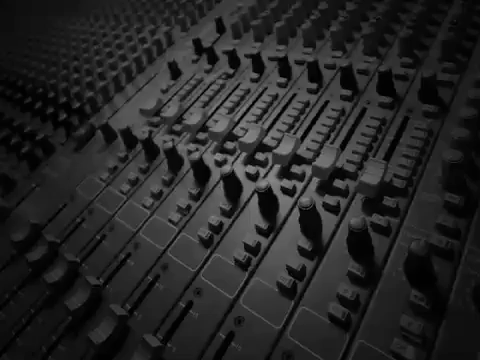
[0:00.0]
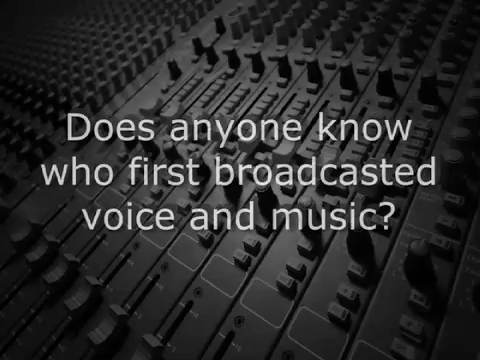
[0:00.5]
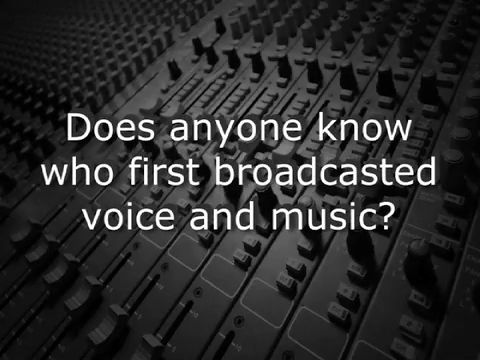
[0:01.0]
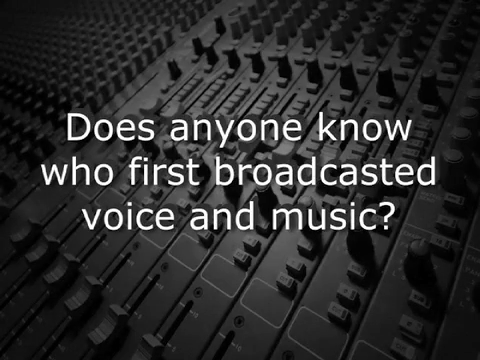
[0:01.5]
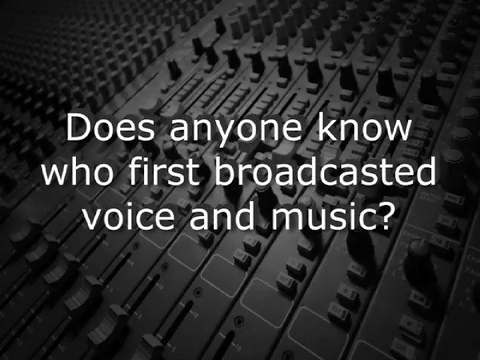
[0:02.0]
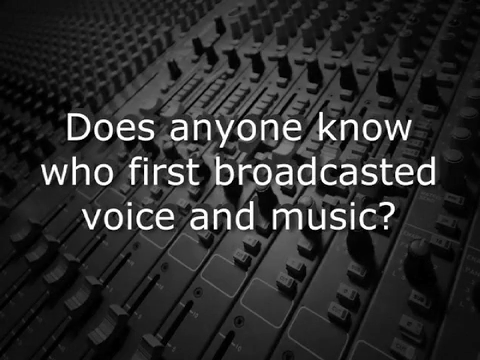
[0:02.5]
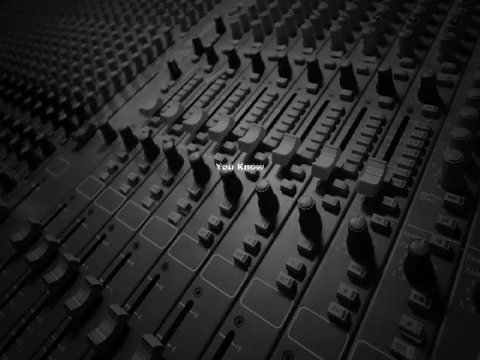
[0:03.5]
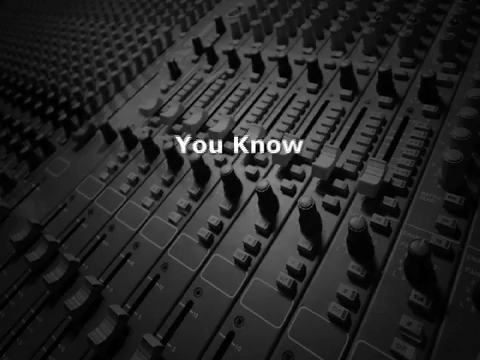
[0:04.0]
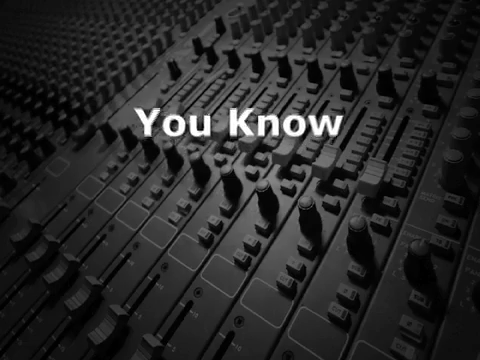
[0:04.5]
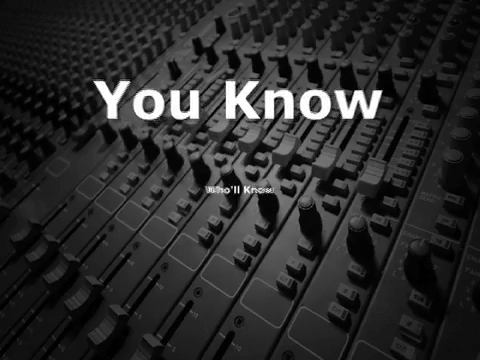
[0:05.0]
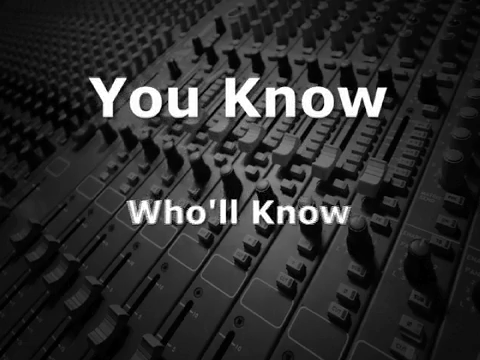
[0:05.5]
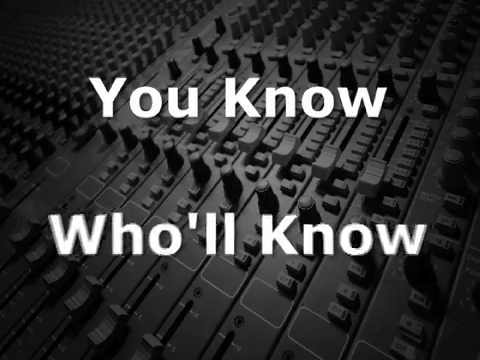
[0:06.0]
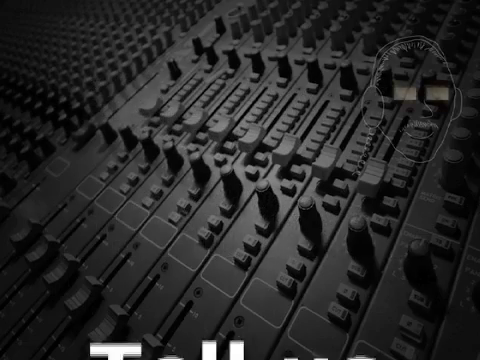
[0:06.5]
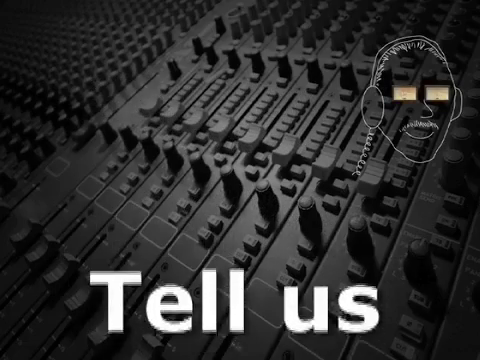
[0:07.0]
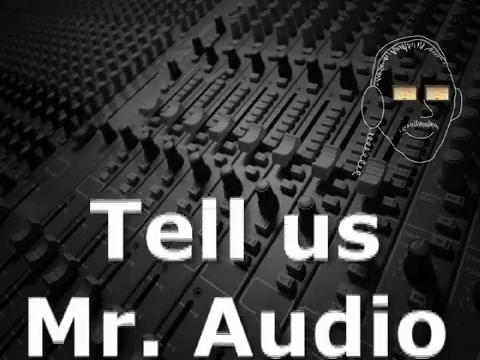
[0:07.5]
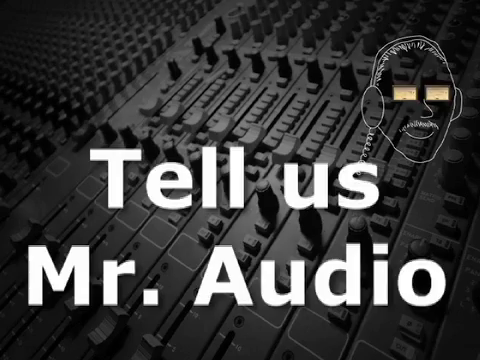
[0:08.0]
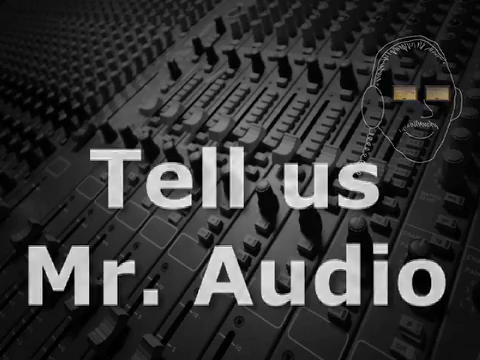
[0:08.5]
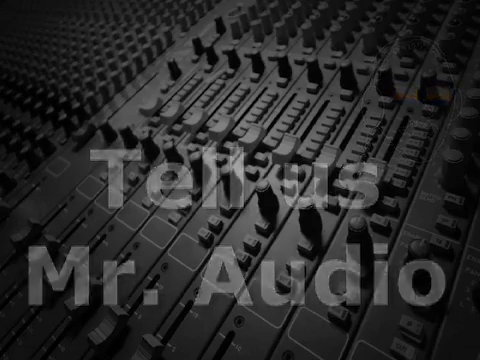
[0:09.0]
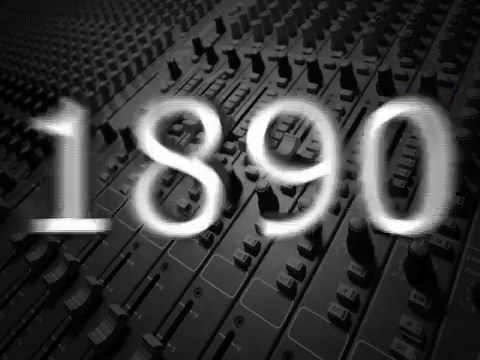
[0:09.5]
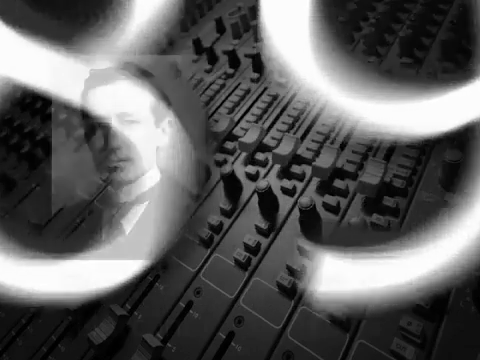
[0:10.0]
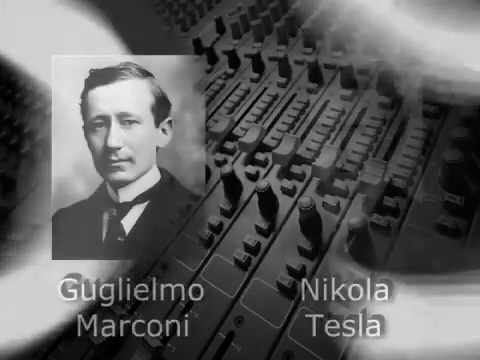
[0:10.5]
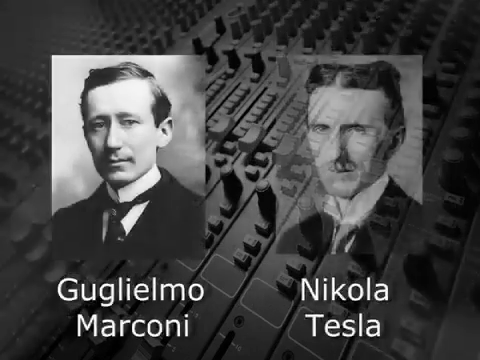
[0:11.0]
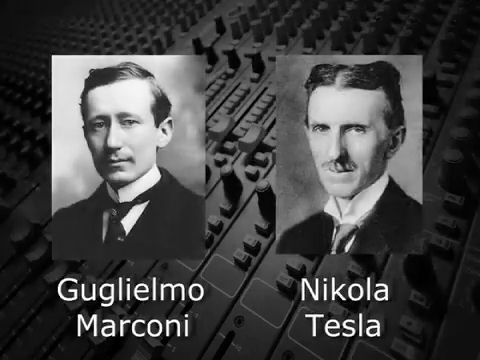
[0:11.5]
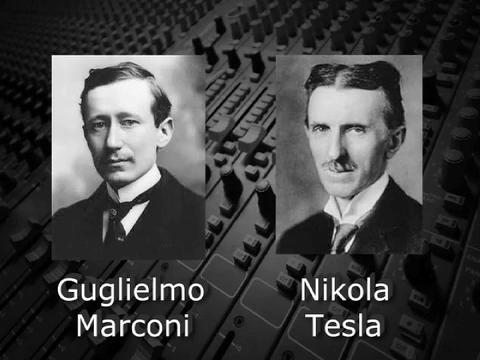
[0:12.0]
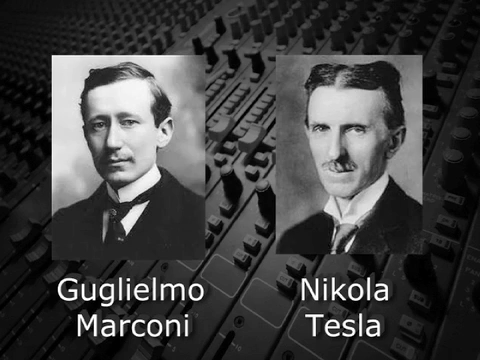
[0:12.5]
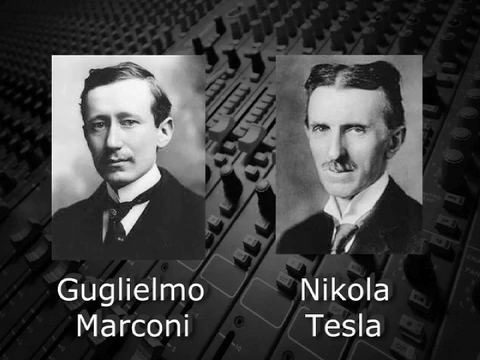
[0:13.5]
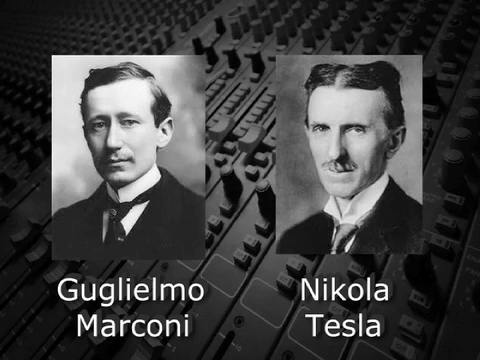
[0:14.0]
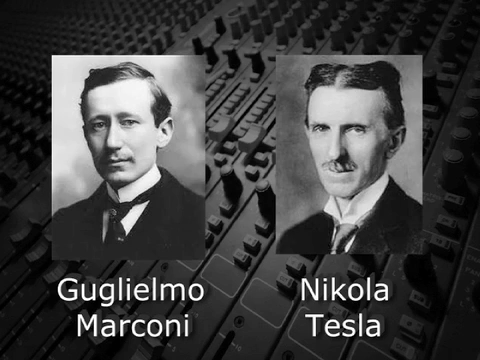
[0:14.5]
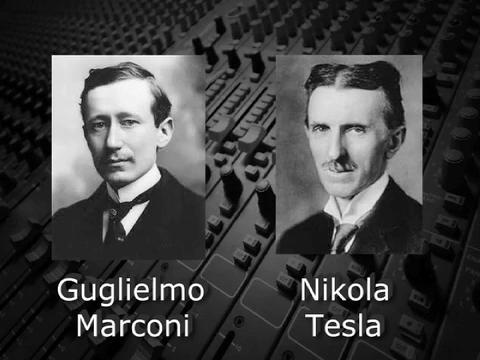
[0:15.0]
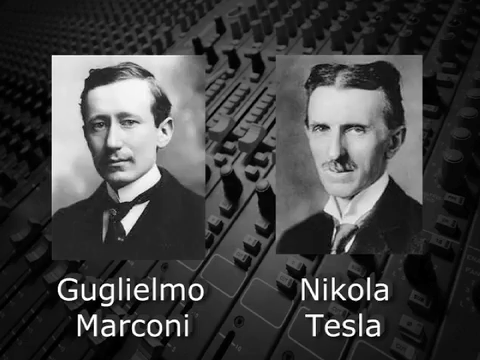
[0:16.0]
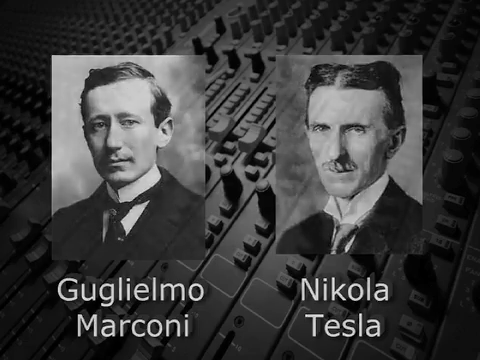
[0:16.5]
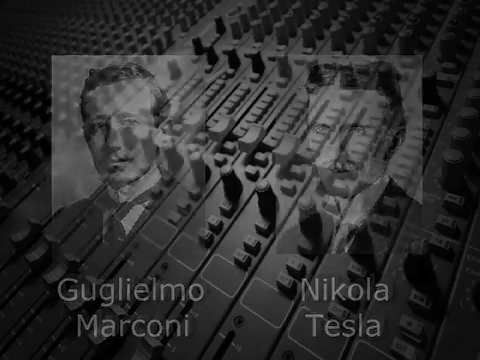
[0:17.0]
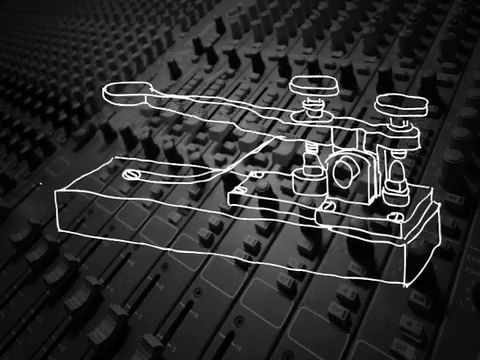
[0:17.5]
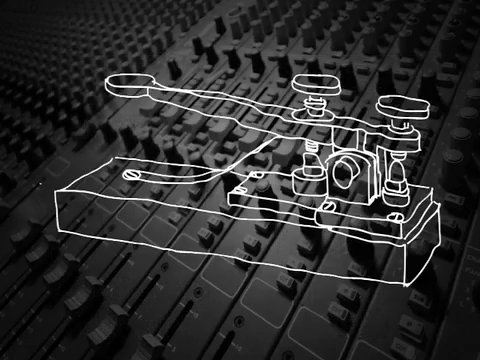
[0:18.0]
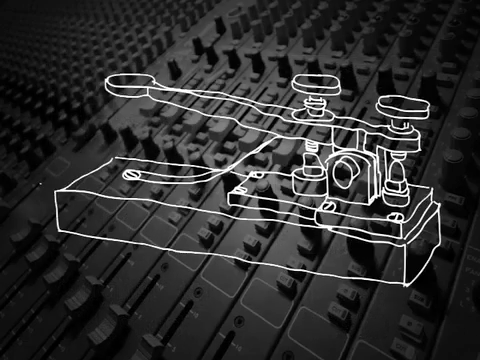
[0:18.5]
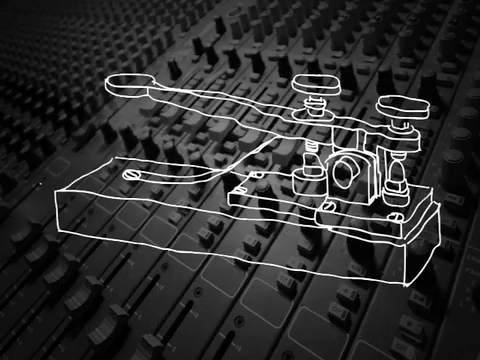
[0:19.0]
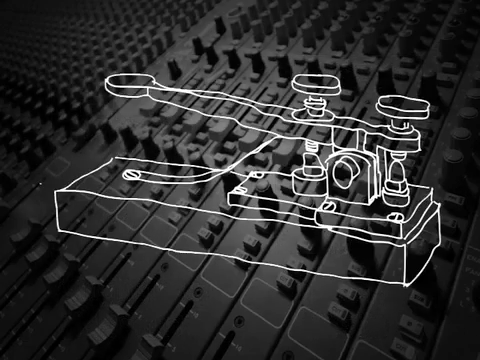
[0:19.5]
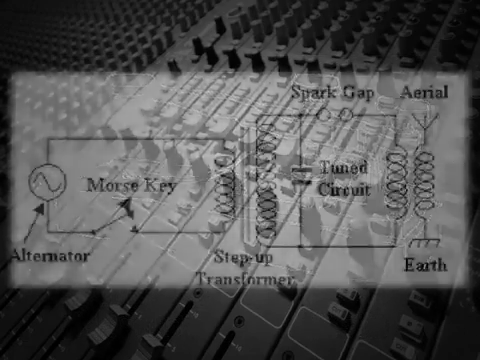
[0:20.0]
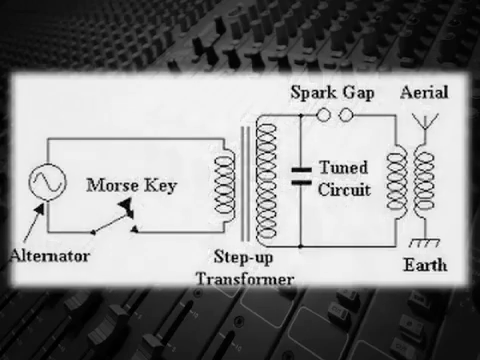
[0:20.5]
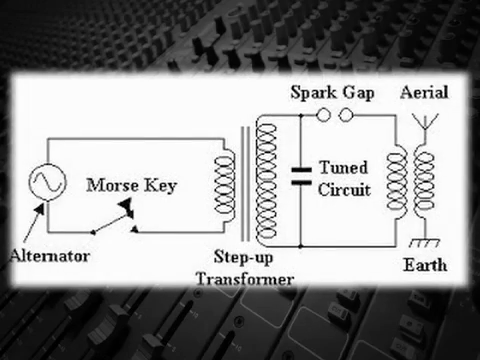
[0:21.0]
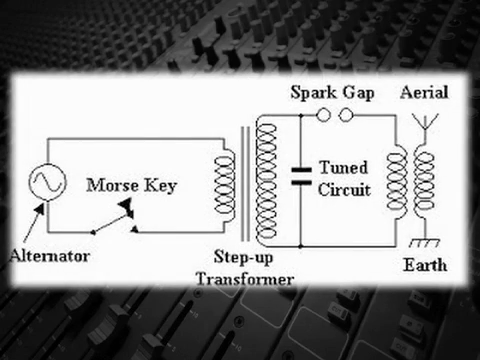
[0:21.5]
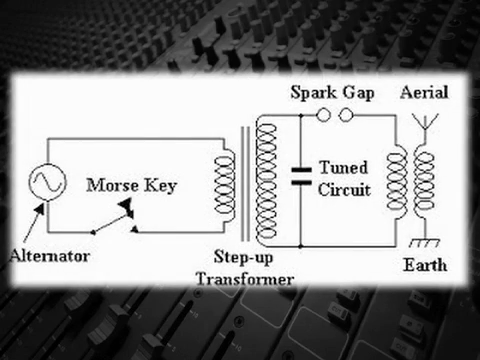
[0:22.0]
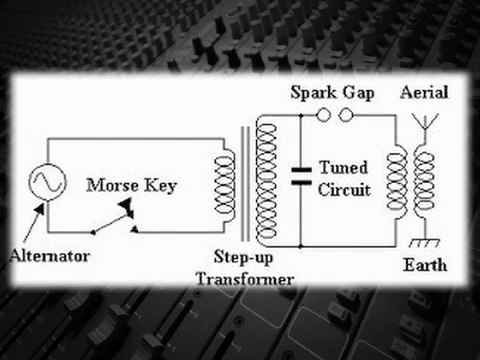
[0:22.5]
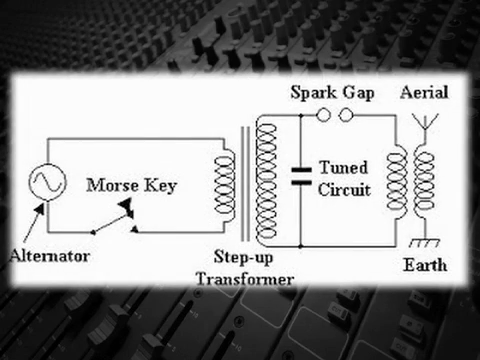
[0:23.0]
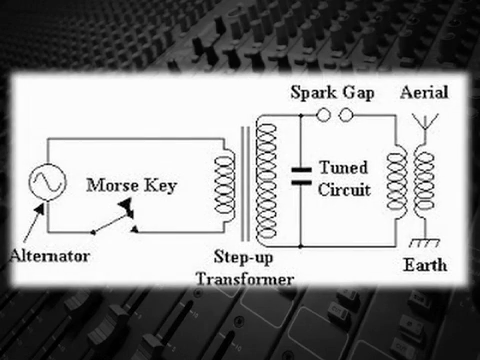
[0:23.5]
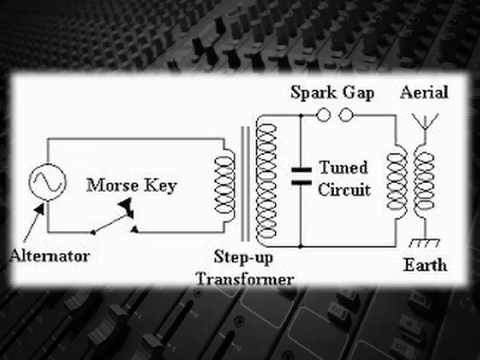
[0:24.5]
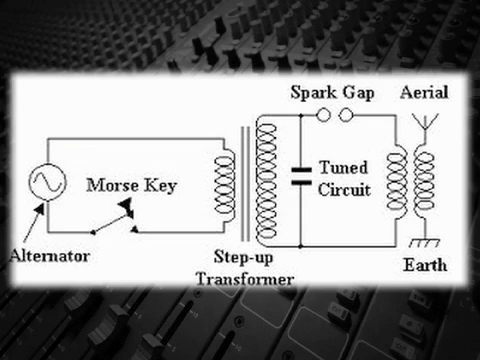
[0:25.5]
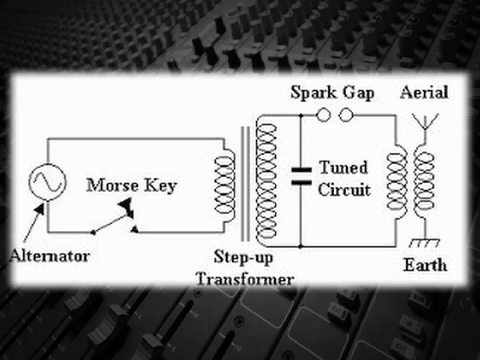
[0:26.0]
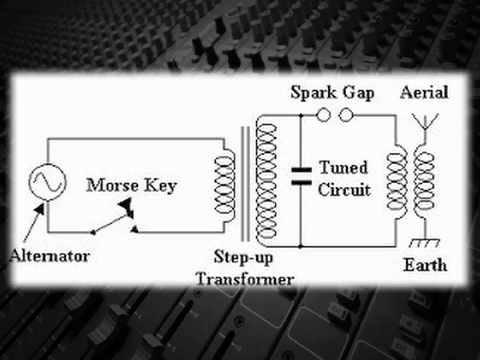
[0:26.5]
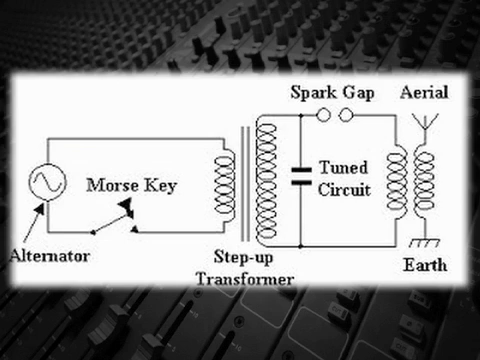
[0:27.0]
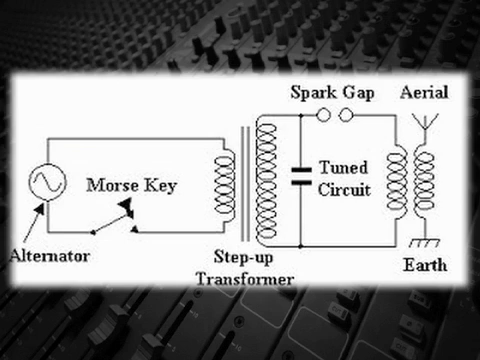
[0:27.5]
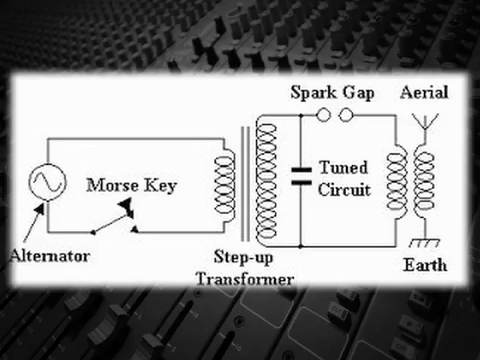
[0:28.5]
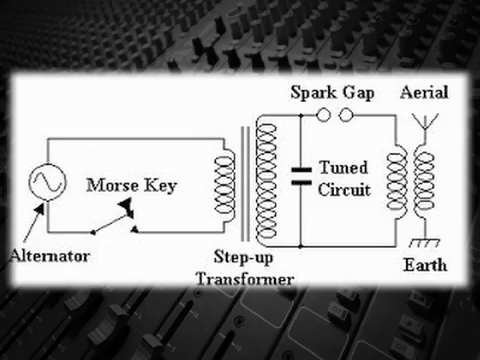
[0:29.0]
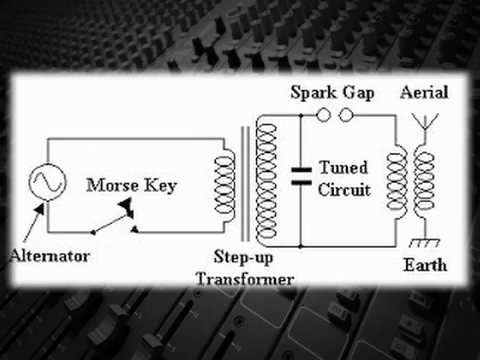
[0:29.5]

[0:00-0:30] The video opens with a caption that reads "does anyone know who first broadcasted voice and music?" in white font. Behind this title is a black-and-white background of a sound system, recognizable by its array of buttons and switches. The title quickly vanishes as part of an effect. Another caption then pops up, ending "tell us Mr. Audio," alongside an illustration of a man. The video quickly transitions to two historical figures: Nikola Tesla on the right and Marconi on the left, each shown in a portrait. Next, a doodle of what appears to be machinery from the late 1800s pops up, with its handle shaking. Before this part ends, a graph appears that seems to show elements of the early invention.